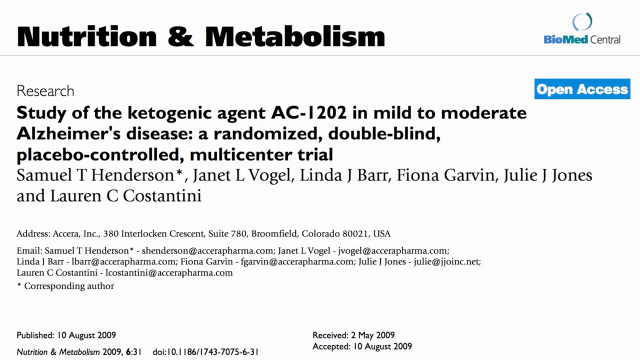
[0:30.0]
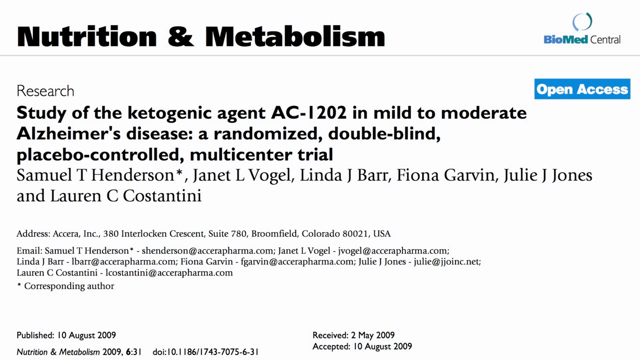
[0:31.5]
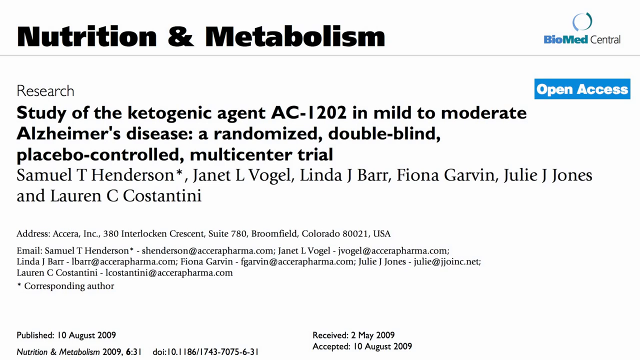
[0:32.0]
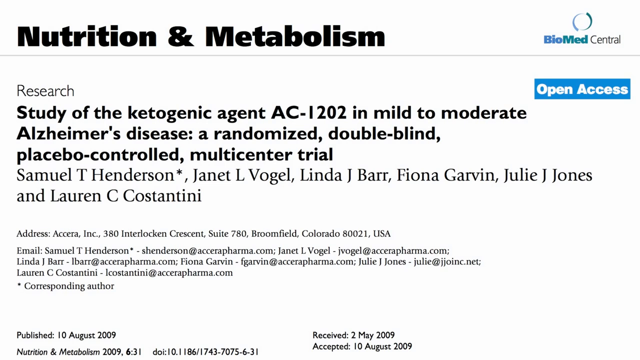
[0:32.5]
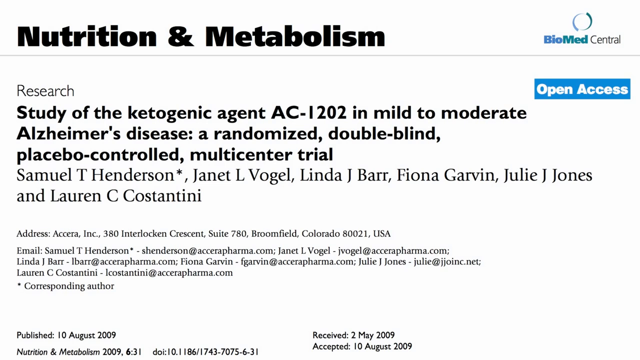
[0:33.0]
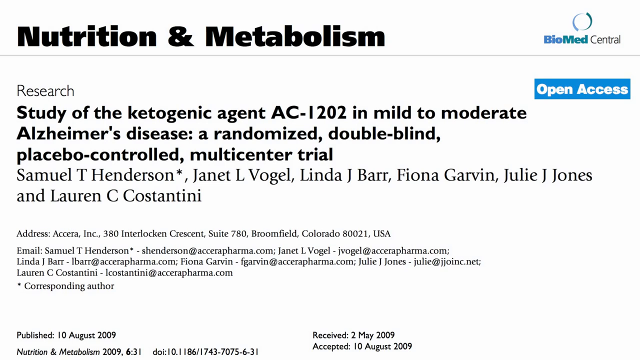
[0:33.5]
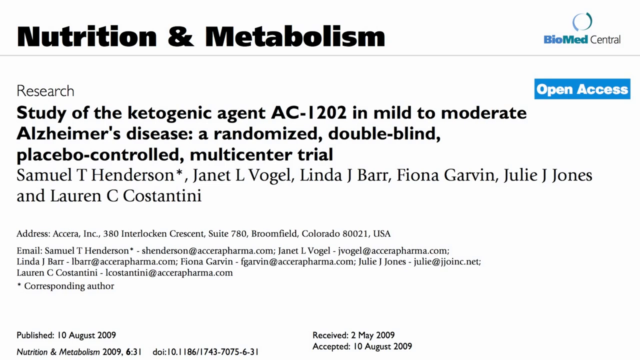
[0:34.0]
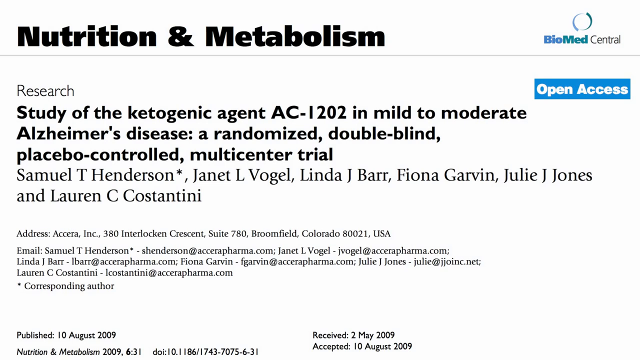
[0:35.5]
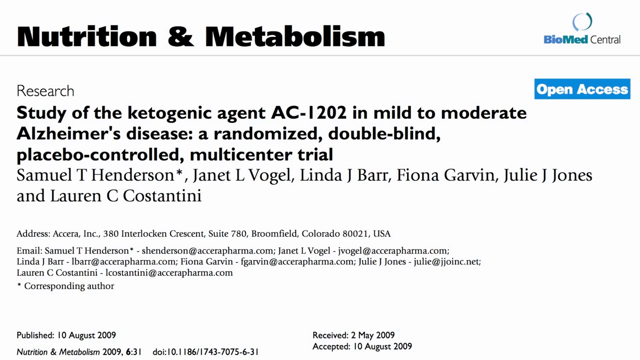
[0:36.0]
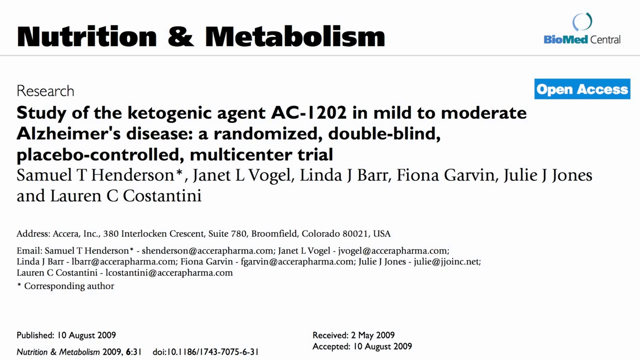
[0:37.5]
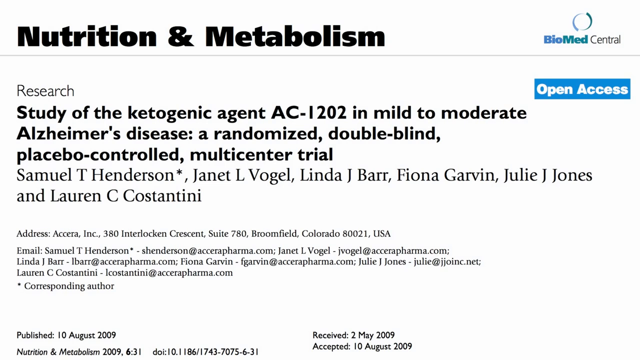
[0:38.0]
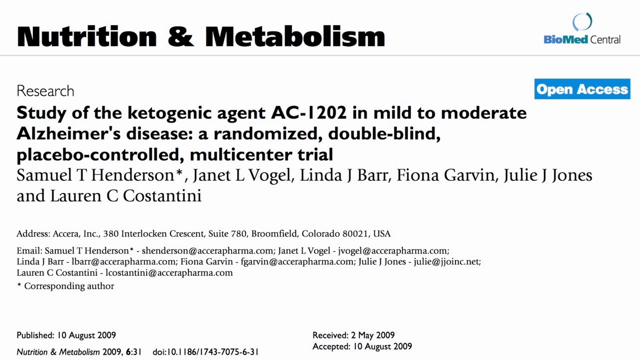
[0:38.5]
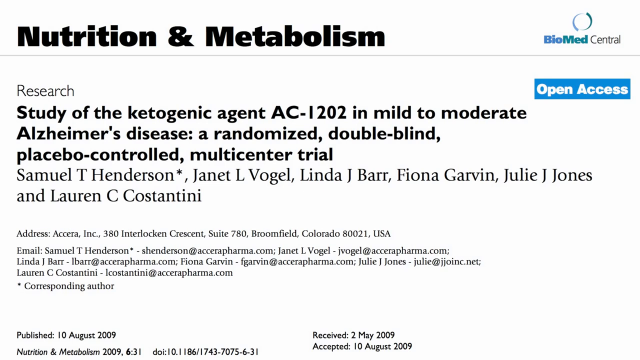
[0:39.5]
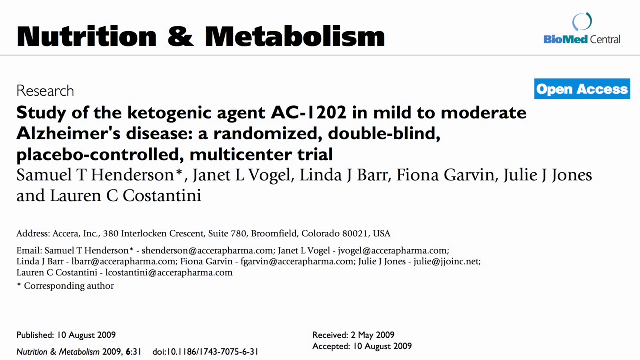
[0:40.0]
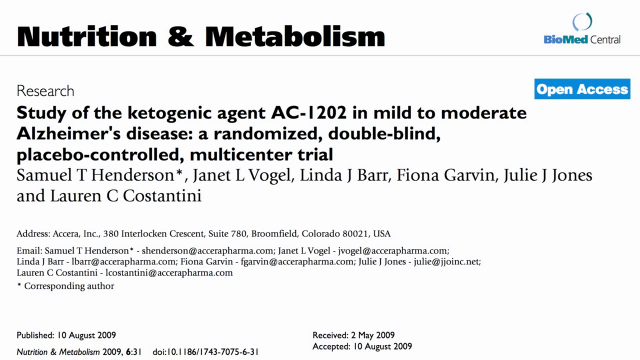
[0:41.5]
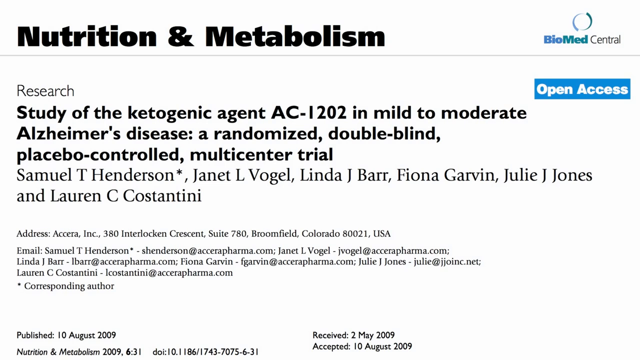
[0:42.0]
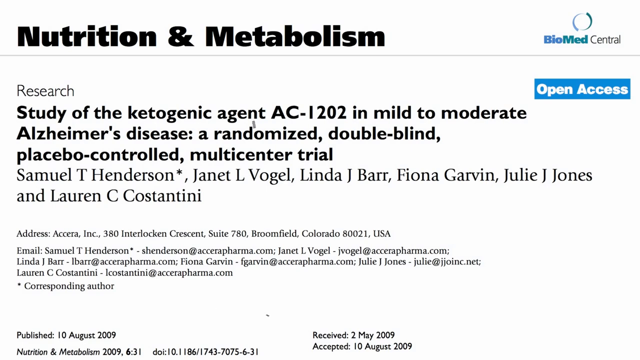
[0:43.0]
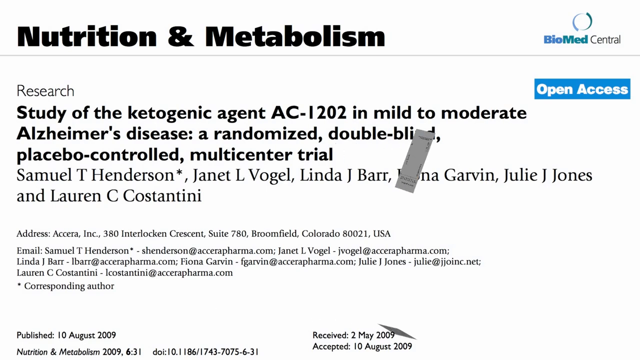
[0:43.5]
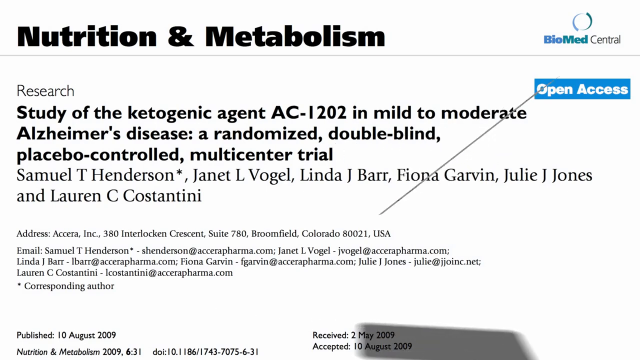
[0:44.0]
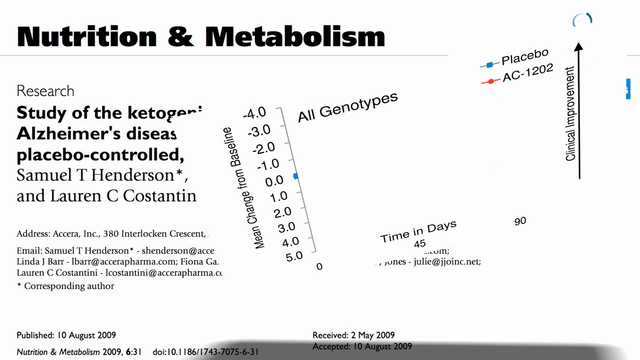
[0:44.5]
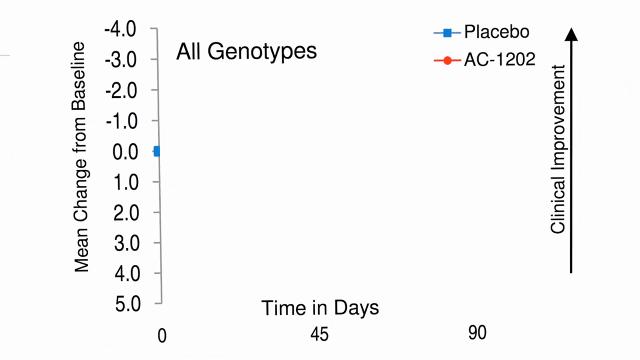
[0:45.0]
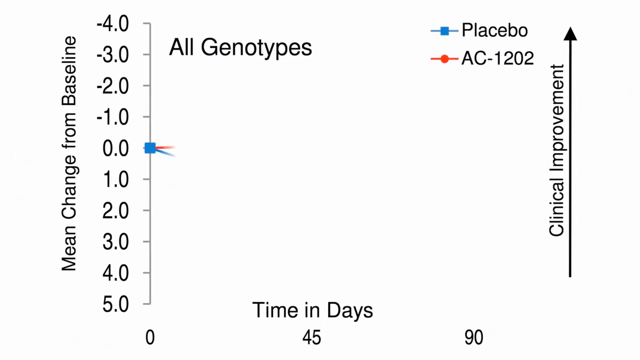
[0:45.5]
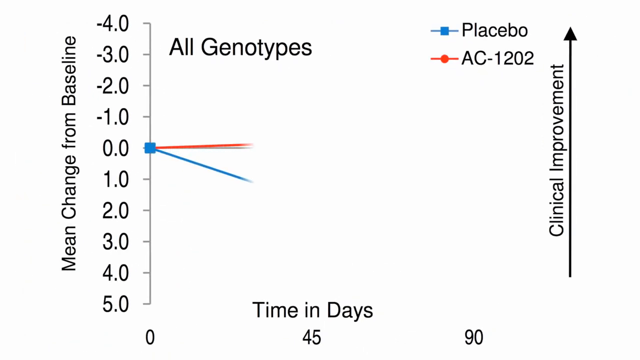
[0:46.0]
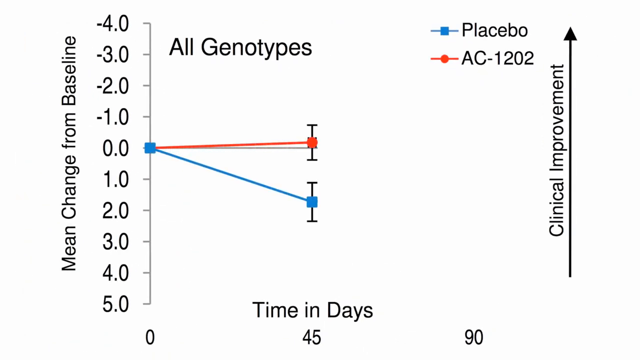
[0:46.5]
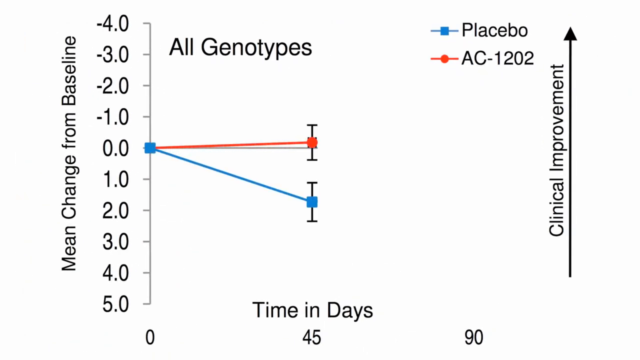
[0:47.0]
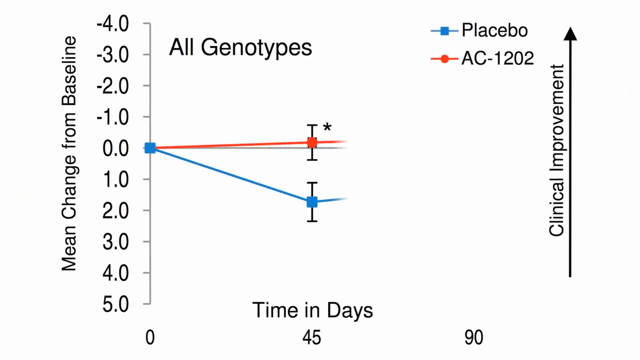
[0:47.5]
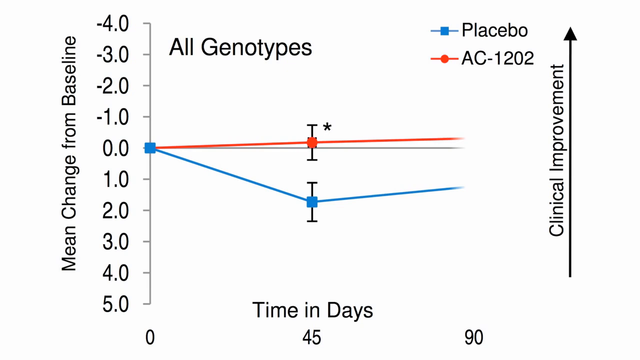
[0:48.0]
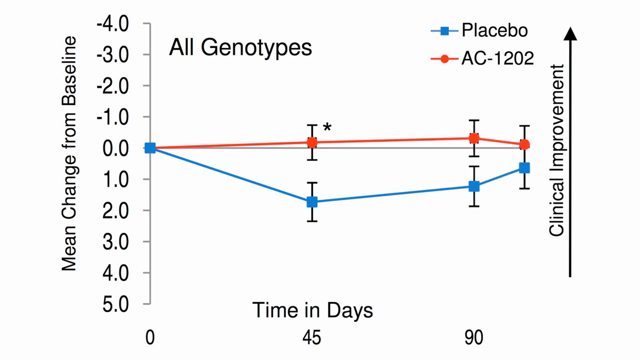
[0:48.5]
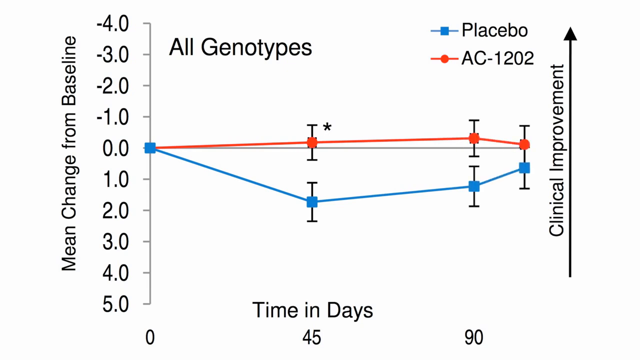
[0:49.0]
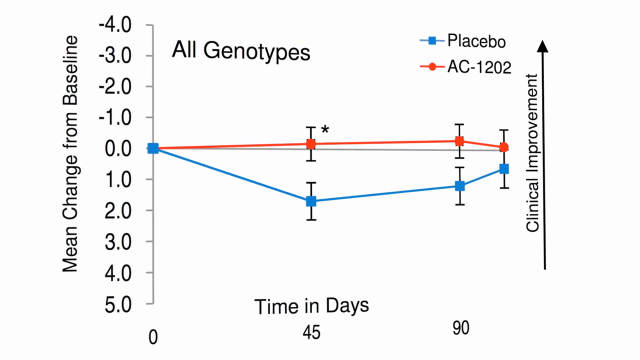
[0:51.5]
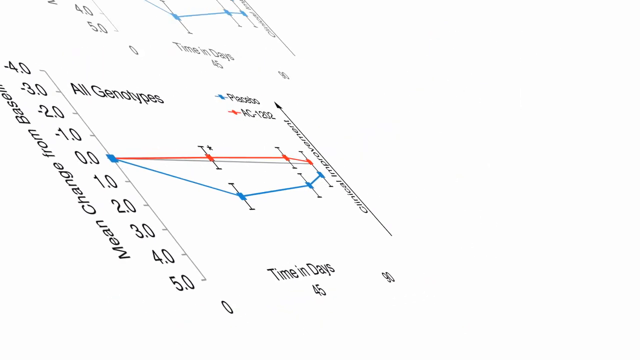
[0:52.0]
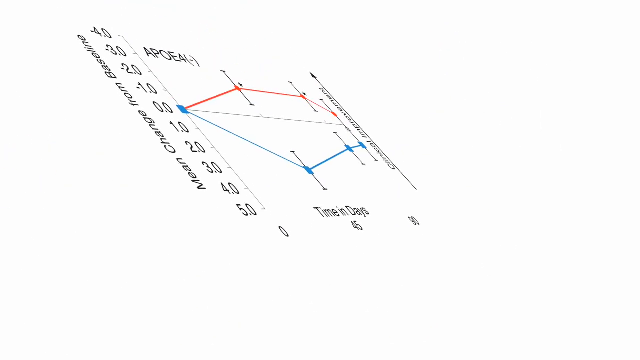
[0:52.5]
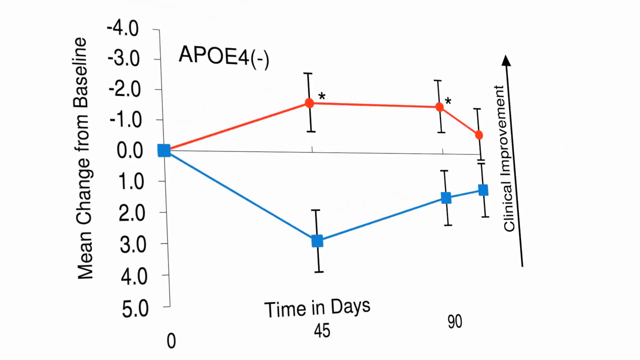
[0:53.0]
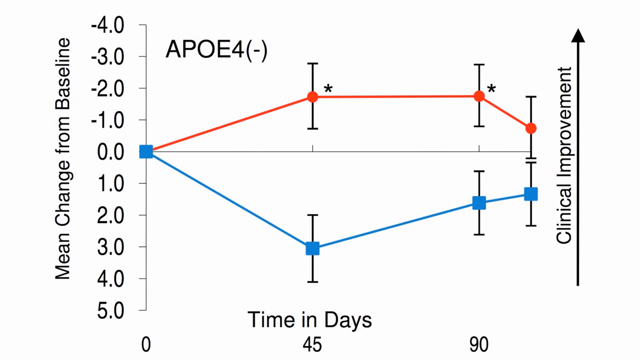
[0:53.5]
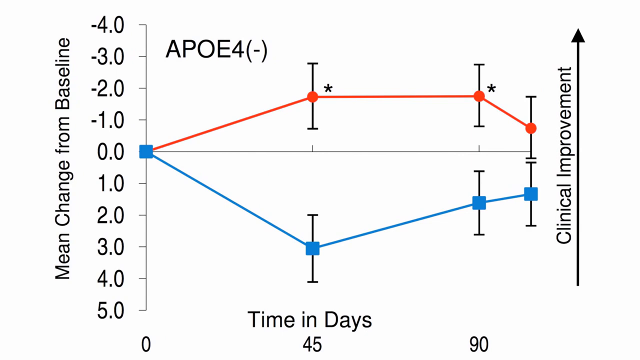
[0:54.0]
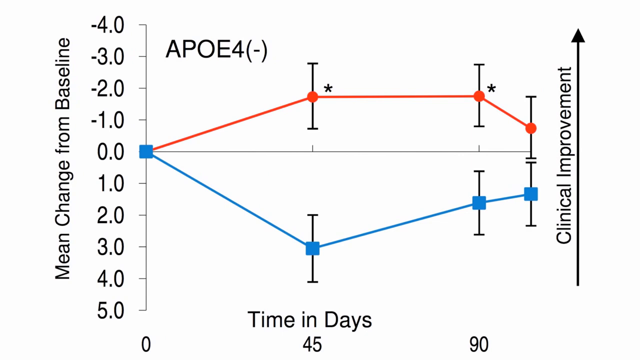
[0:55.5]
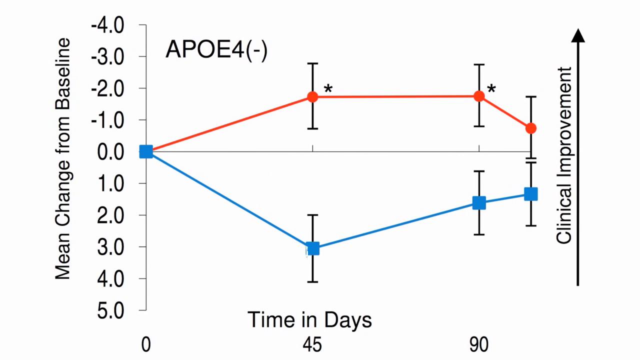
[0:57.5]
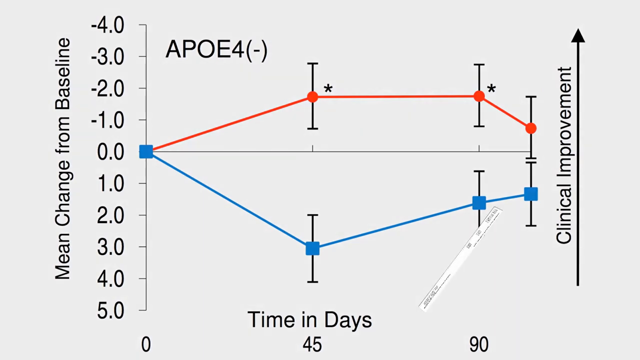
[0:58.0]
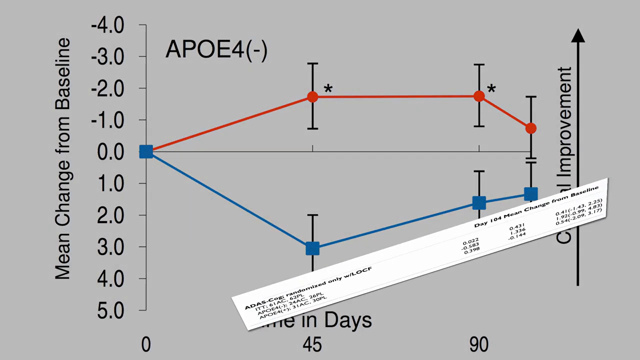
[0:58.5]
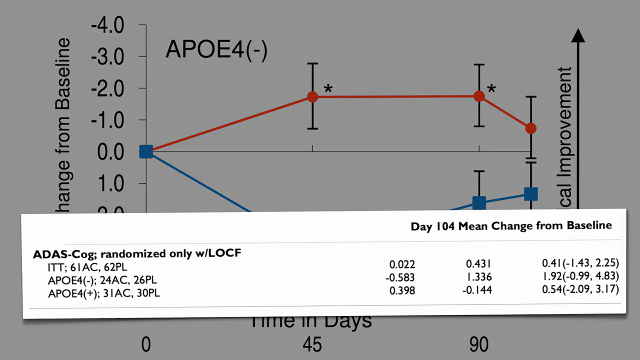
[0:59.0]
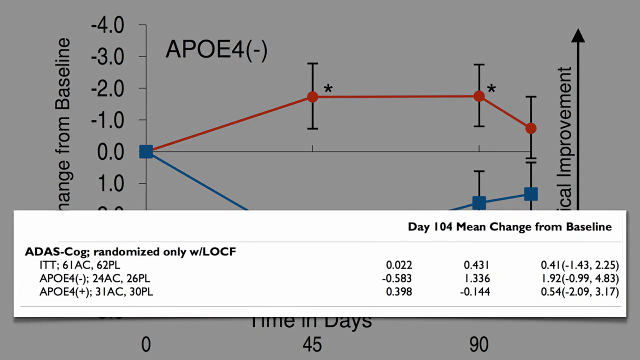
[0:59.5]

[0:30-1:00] A digital copy of a research paper is on screen. At the very top, the header in bold black reads "nutrition and metabolism", and in the top right corner is the Biomed central logo: "Biomed" is in blue and green with a small circular logo above, and the word "central" is in black. A thin grey line separates this header from the word "research" underneath, followed by the title of the paper, "study of the ketogenic agent AC-1202 in mild to moderate Alzheimer's, a randomized double-blind placebo-controlled multicenter trial". The researchers' names are listed, followed by the address and email address in a smaller font. A blue logo on the right side towards the top of the paper reads "Open Access". Small black text at the bottom shows the paper was published 10th of August 2009.